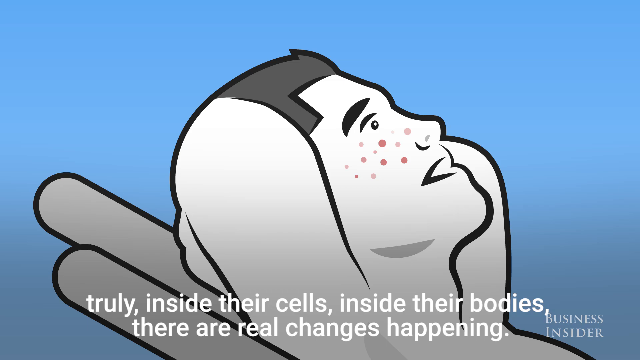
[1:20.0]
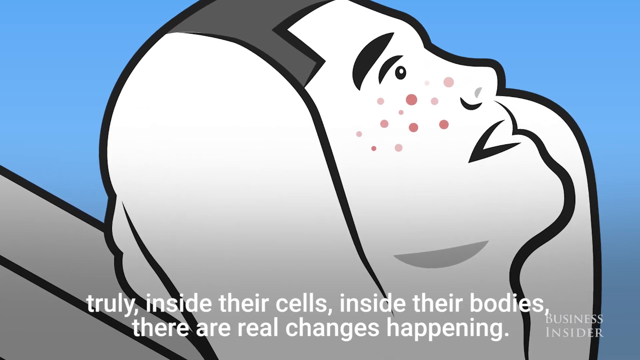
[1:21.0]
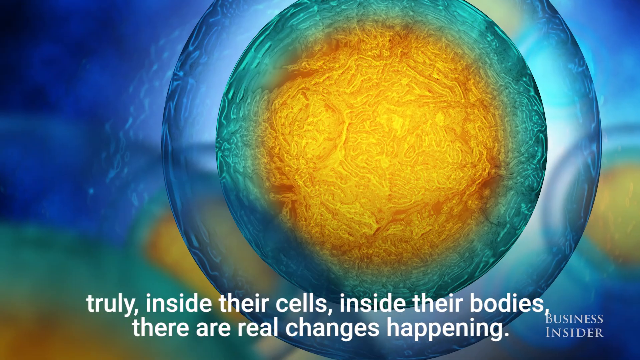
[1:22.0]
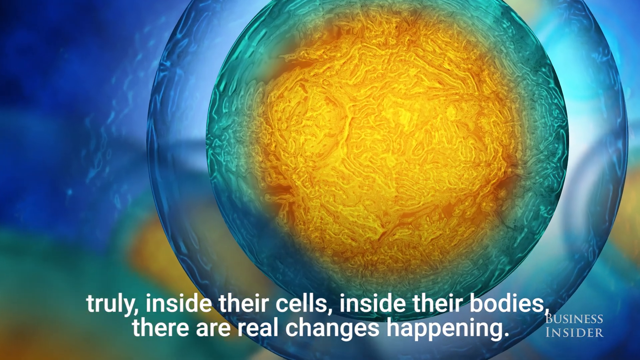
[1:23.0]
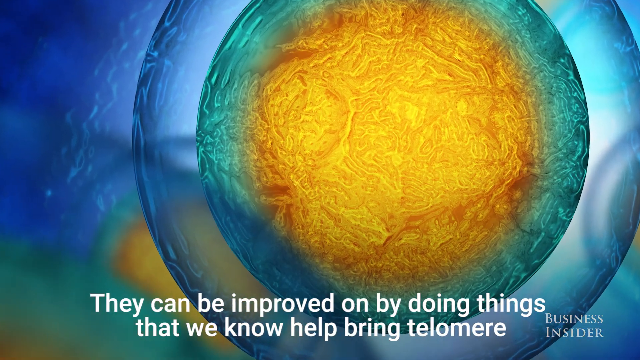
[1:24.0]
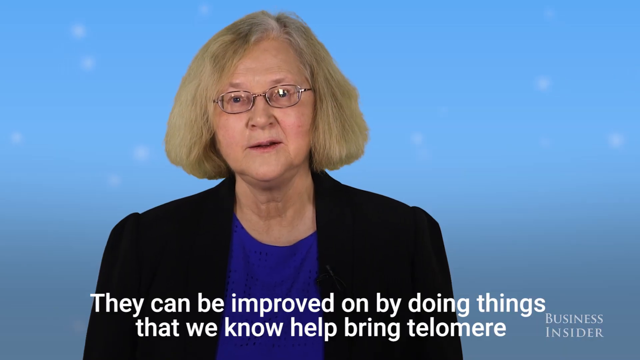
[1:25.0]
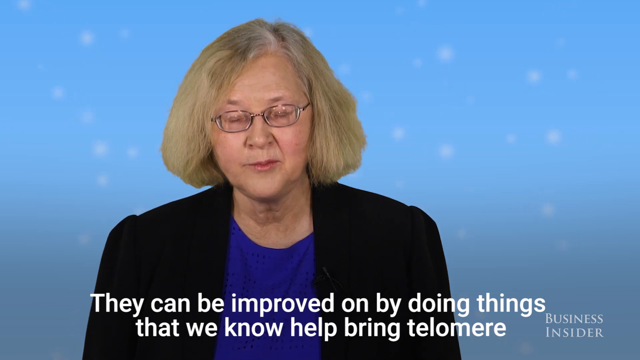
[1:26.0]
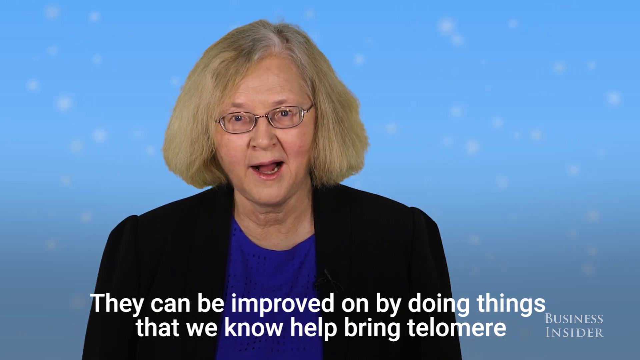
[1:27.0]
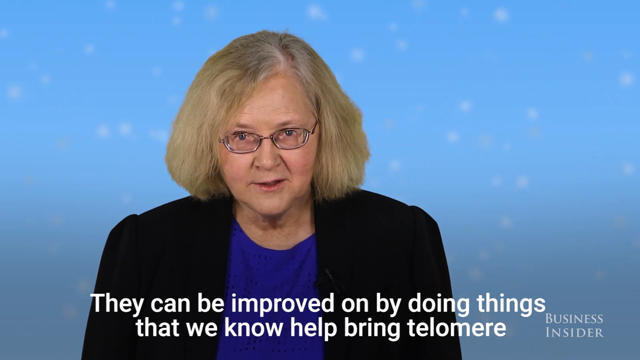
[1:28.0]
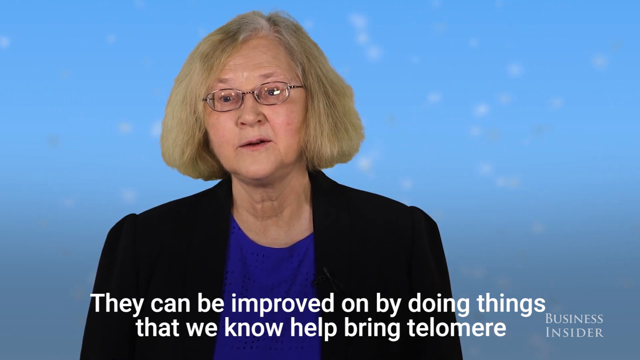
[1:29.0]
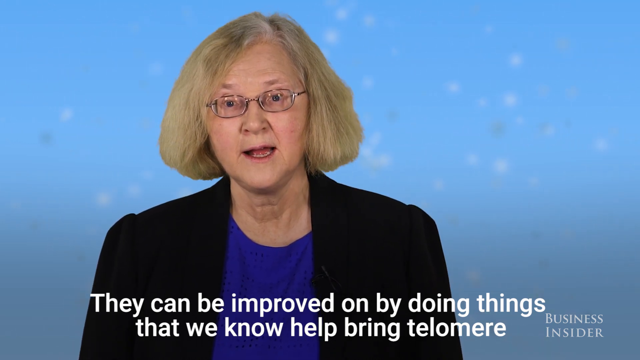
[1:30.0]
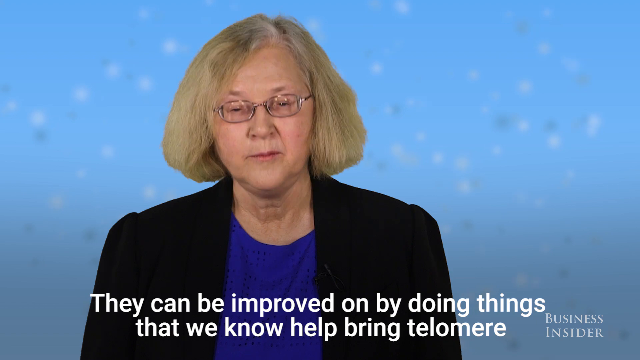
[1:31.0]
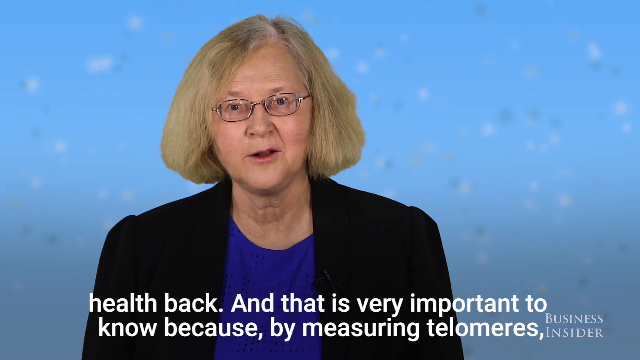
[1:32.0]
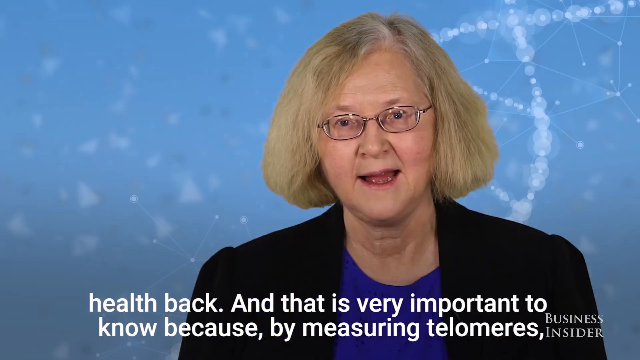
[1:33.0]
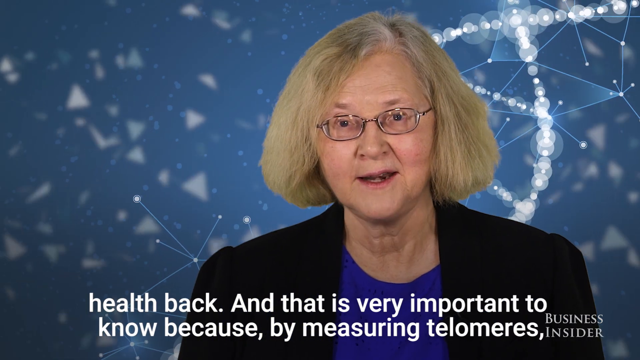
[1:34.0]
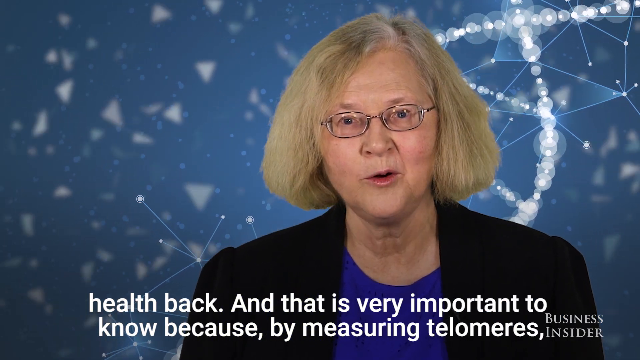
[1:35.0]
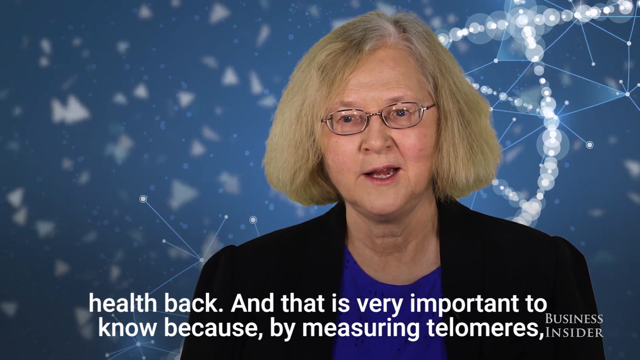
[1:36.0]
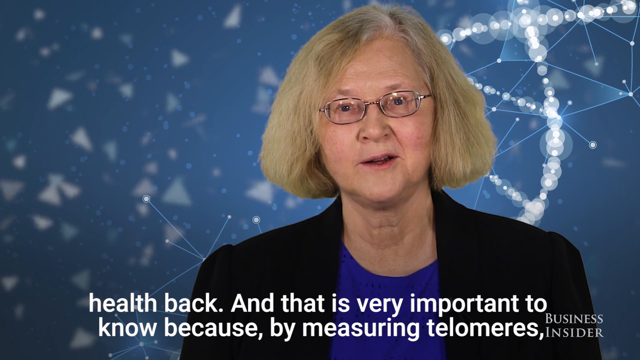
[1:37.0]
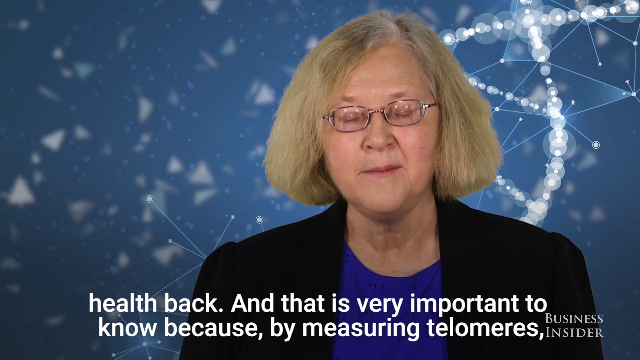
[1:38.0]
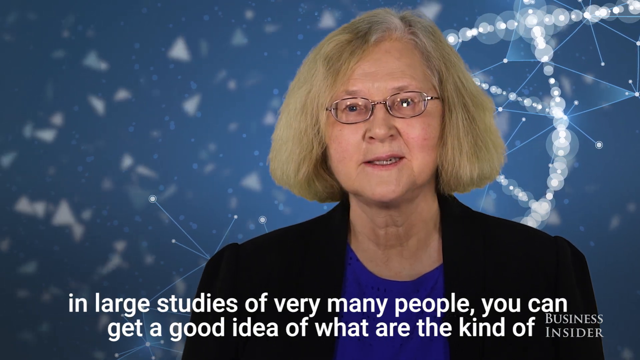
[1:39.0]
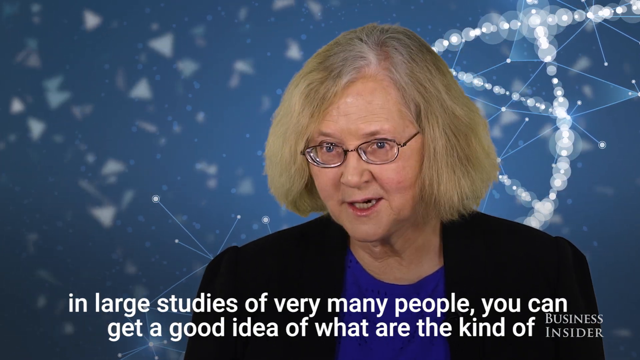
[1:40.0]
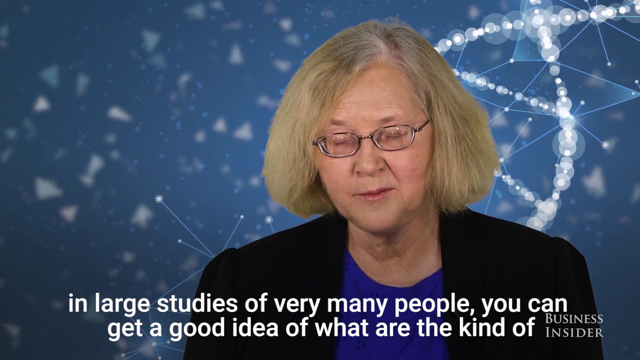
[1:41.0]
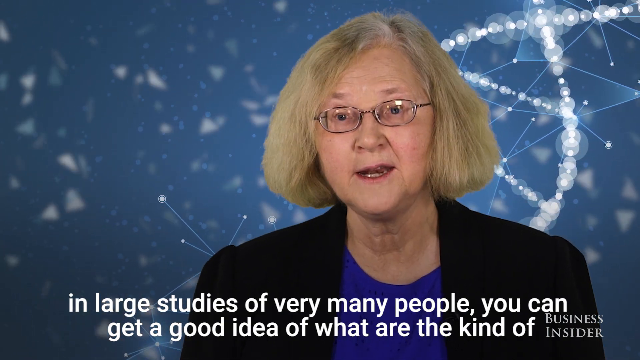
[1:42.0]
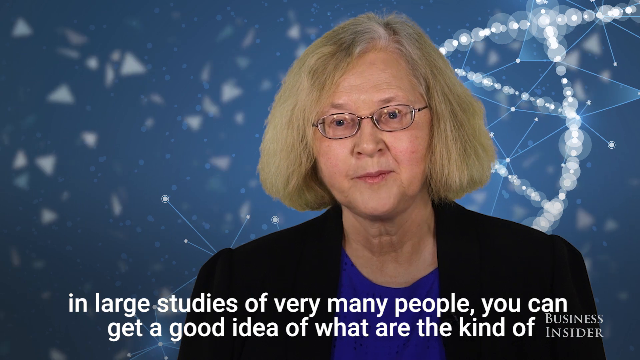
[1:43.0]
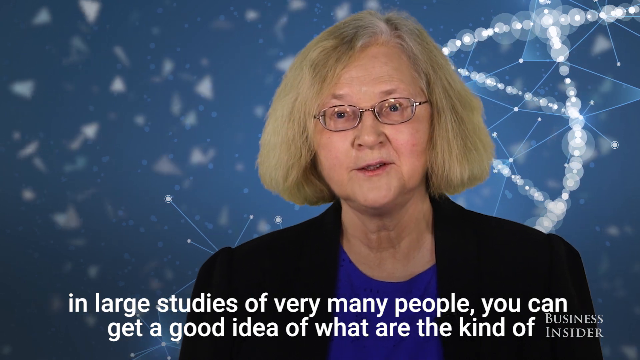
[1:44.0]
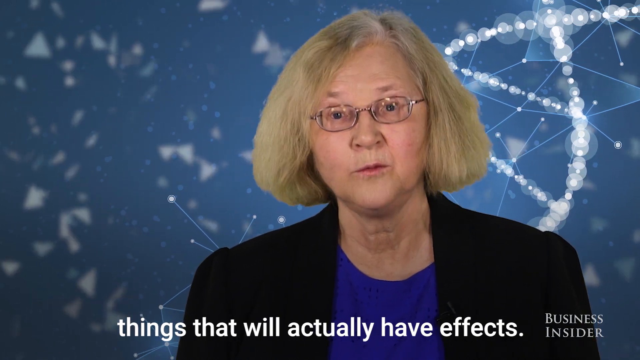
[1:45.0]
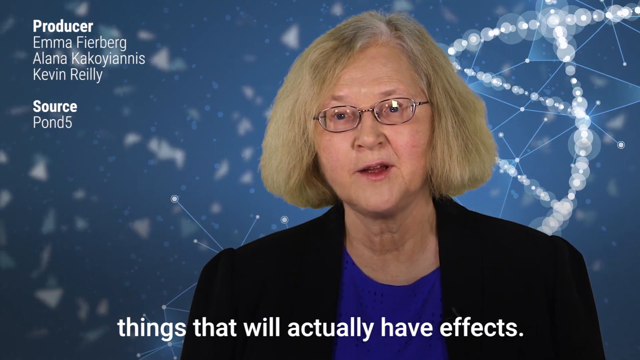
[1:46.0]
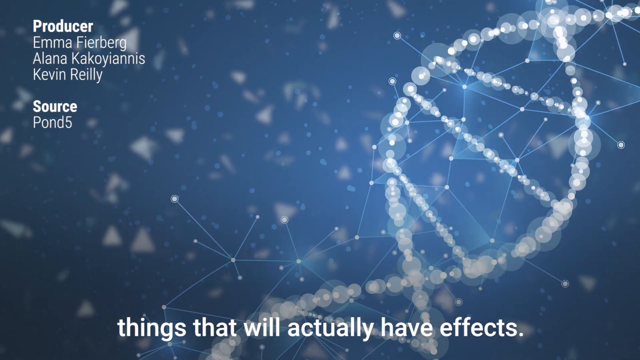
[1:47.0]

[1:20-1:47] A drawing of a man appears, rendered in white with red freckles and gray hair. His arms are raised and then dropped behind his head in an attitude of anguish; he stares upward in front of a blue background. The caption reads, "truly inside their selves, inside their bodies, there are real changes happening." The scene then returns to the blue, turquoise and gold circular representation of a telomere, and then to the narrator, the woman with blonde hair, small glasses, a blue shirt and a black jacket in front of a blue screen. The caption reads, "they can be improved on by doing things that we know help bring telomere health back. And that is very important to know because by measuring telomeres large studies of very many people, you can get a good idea of what are the kind of things that will actually have effects." The credits then roll in the top left corner, with the Business Insider logo in the bottom right.